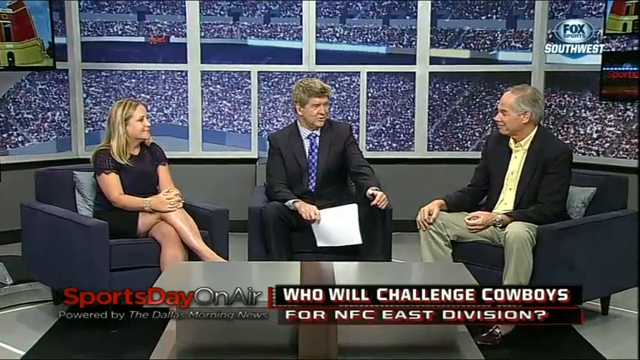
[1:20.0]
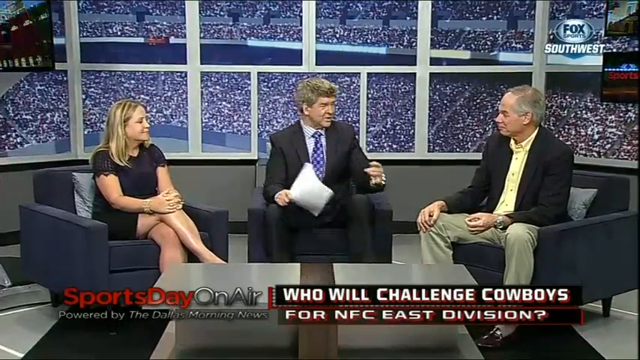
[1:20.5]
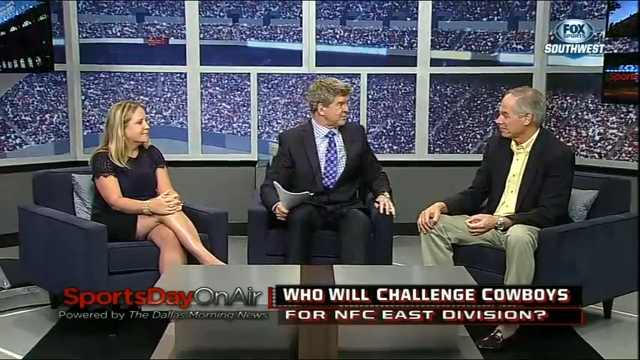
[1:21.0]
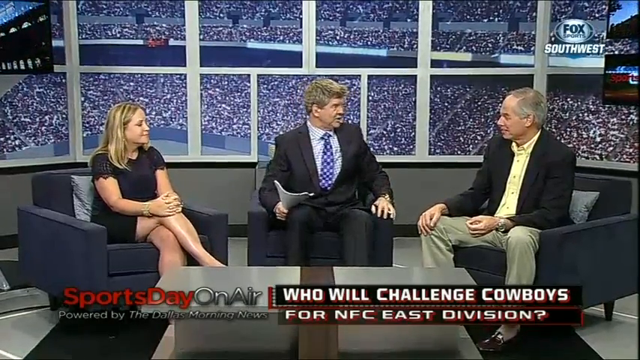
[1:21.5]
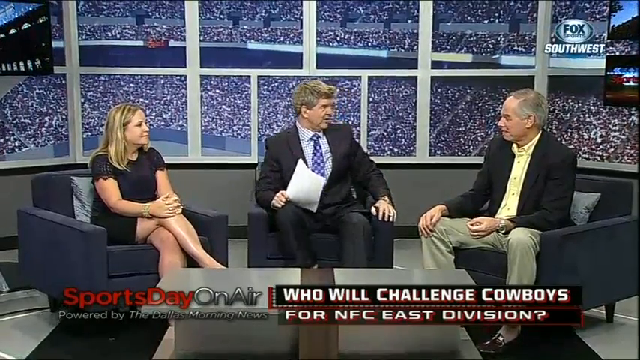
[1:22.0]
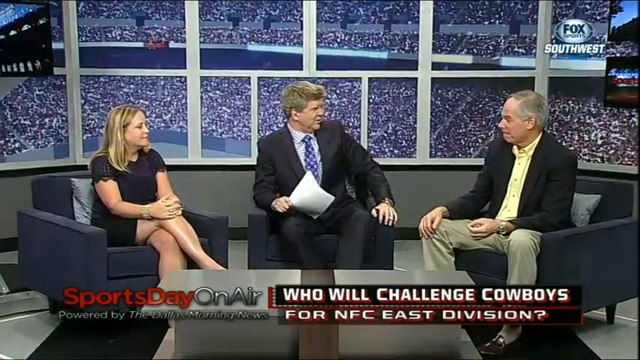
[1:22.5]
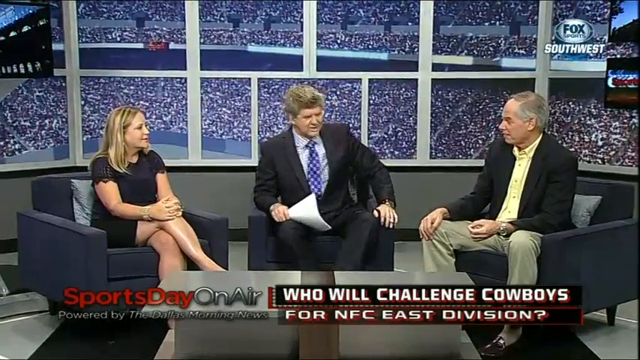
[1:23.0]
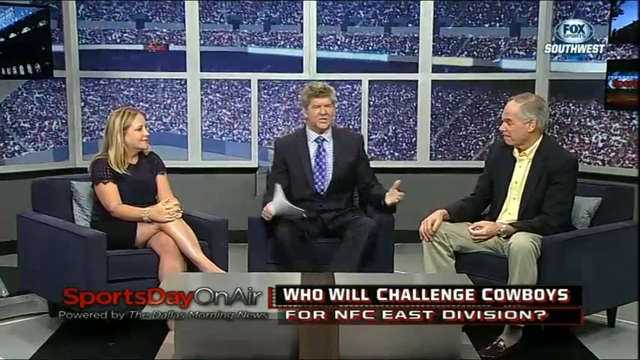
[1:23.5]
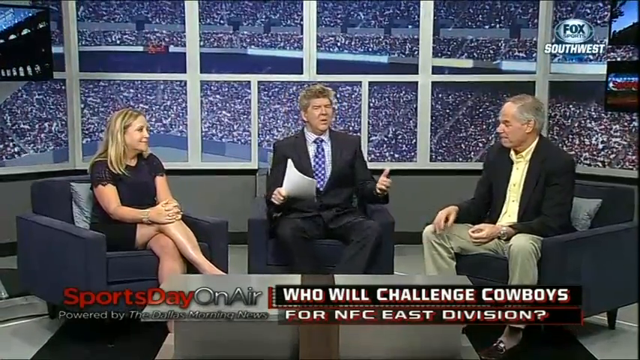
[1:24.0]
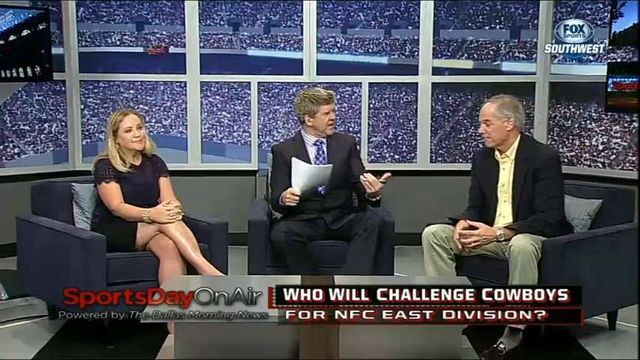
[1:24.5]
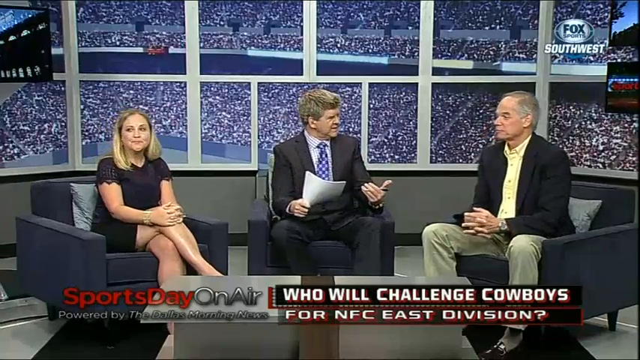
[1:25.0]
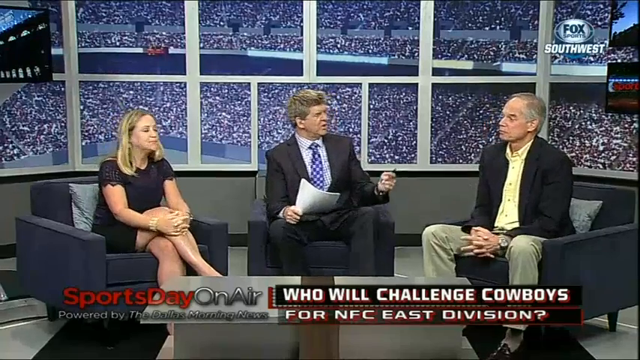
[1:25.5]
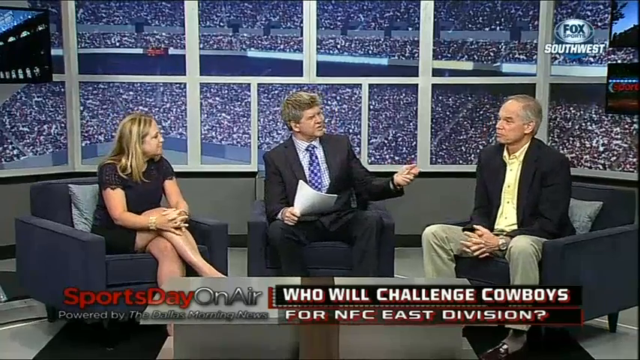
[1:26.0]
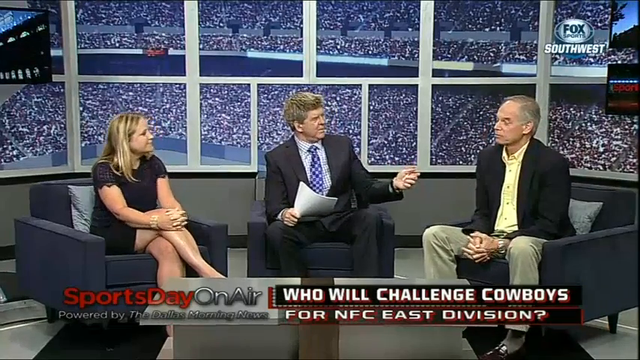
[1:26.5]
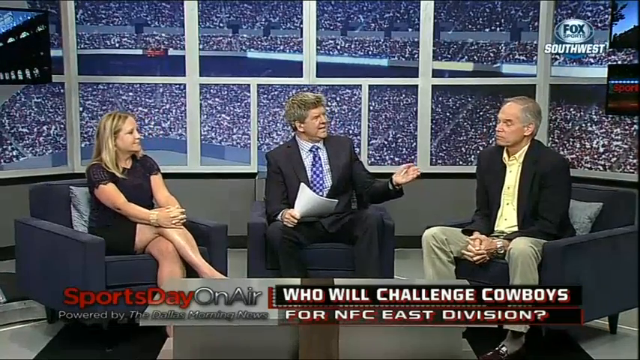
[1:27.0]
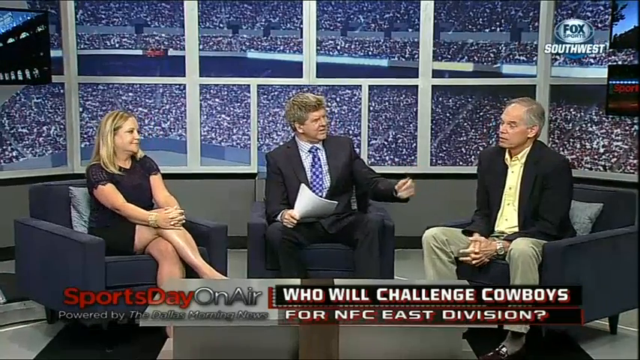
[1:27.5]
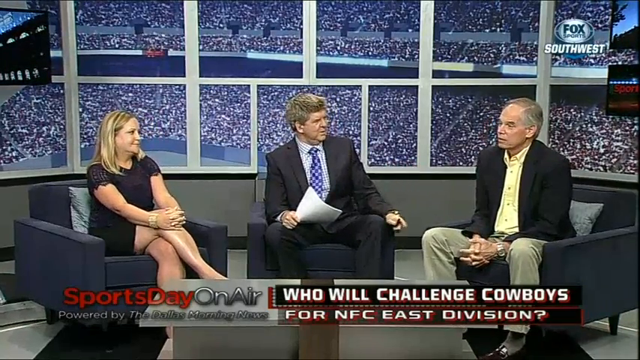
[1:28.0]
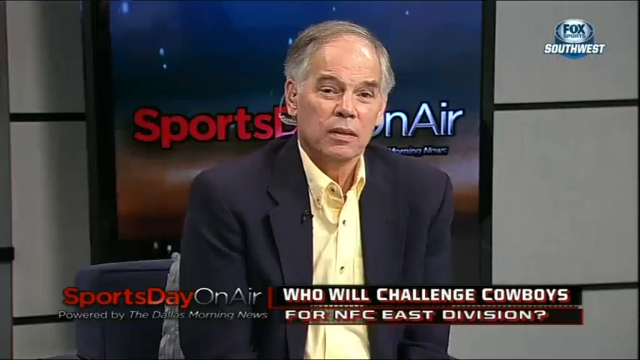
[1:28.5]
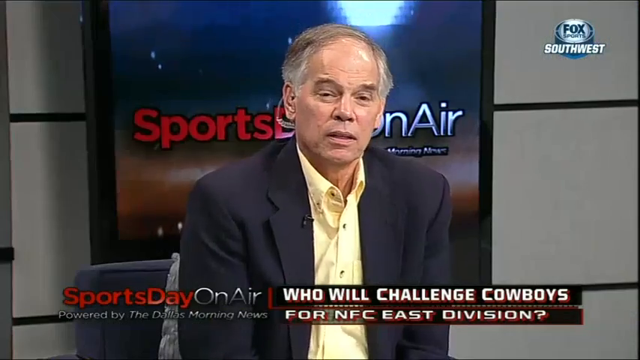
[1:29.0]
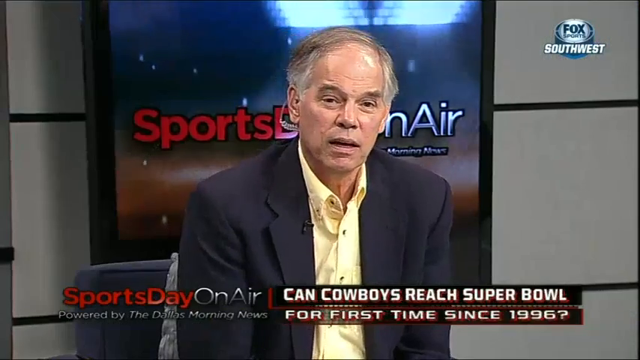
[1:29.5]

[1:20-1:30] The man in the middle is talking and looks kind of excited: he sort of lifts up a bit from his seat, adjusts his seat, and holds both hands outward in an excited gesture. He holds a bunch of paper in his right hand, like a script or something, and looks at the man in the yellow shirt, engaging in a very emotional conversation. The woman on the left side still has her legs crossed, right leg over left, with both hands interlaced on her right knee. She has blonde hair and looks at both men. The man in the middle looks like he wants to get up, twice, and seems to be asking the man on the right some questions. Briefly, the man in yellow appears to think about something and reply before the shot cuts away. The audience is visible in the background through the windows, and the images on the TV monitors are moving.